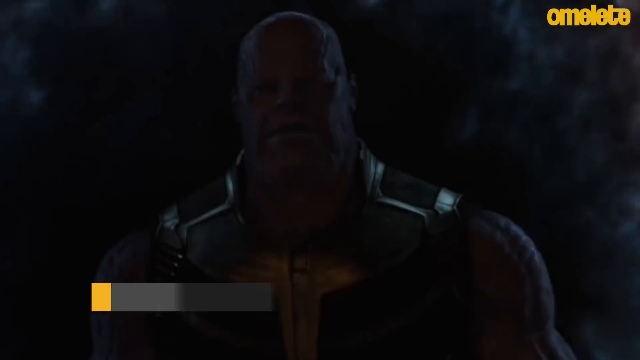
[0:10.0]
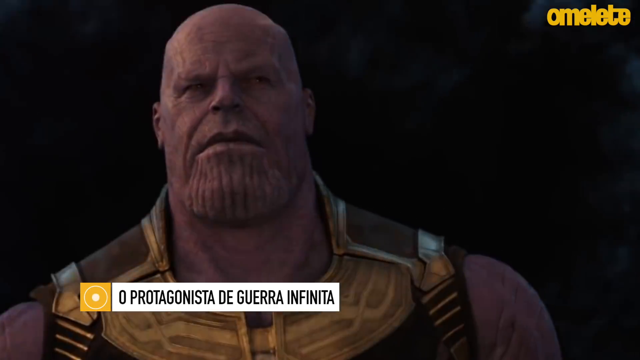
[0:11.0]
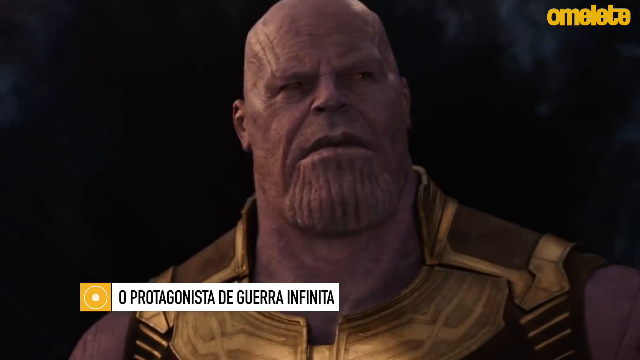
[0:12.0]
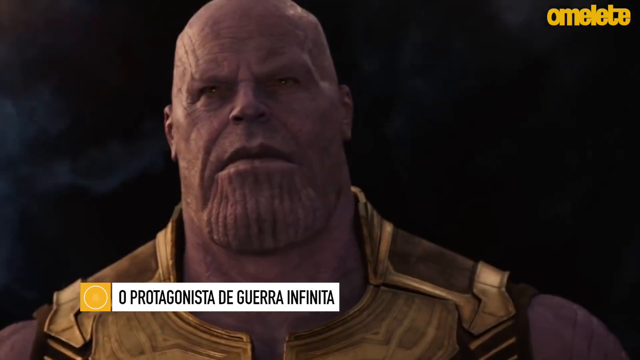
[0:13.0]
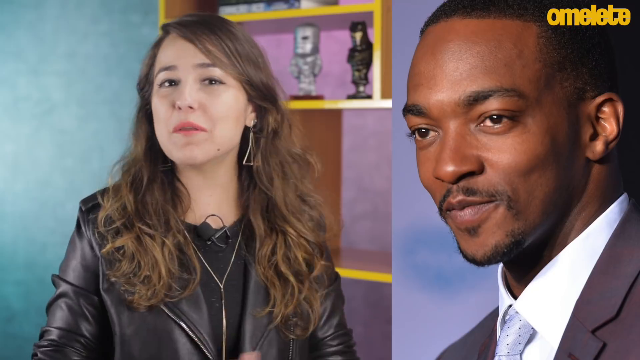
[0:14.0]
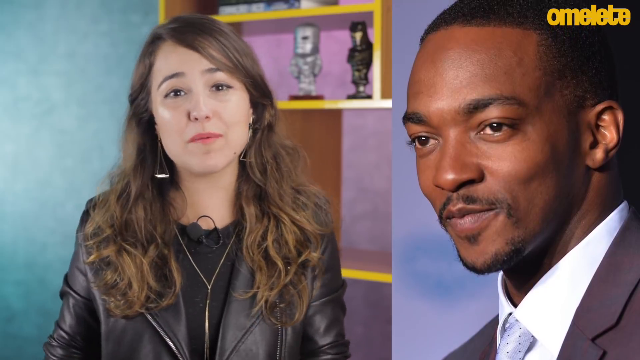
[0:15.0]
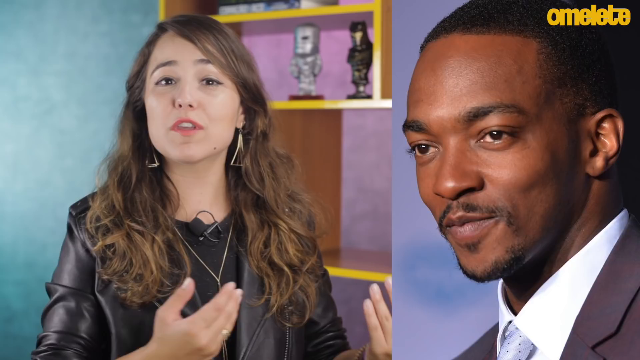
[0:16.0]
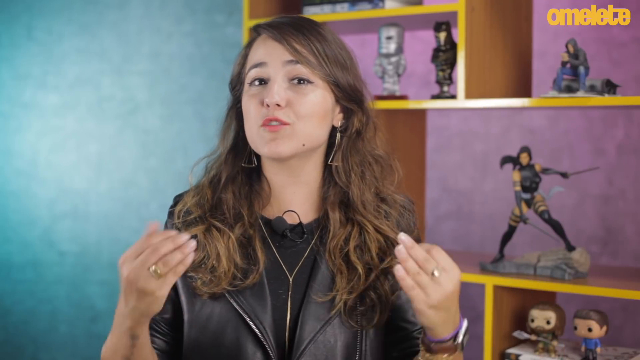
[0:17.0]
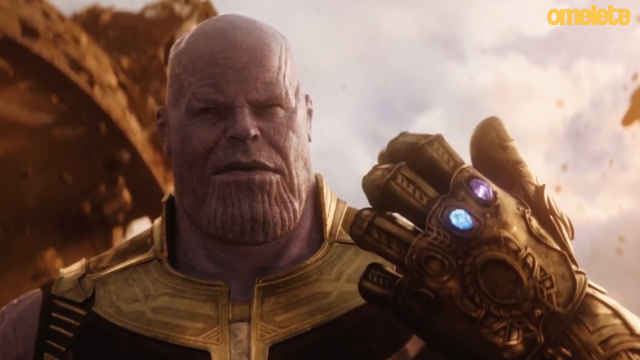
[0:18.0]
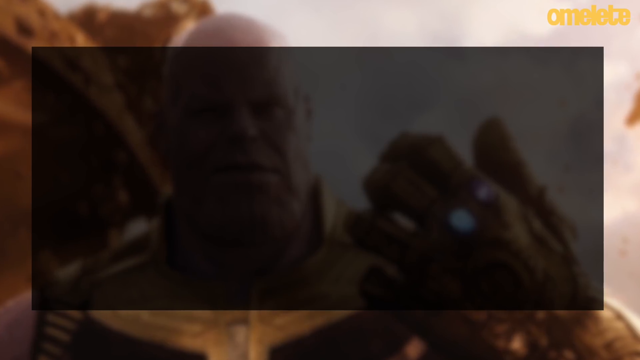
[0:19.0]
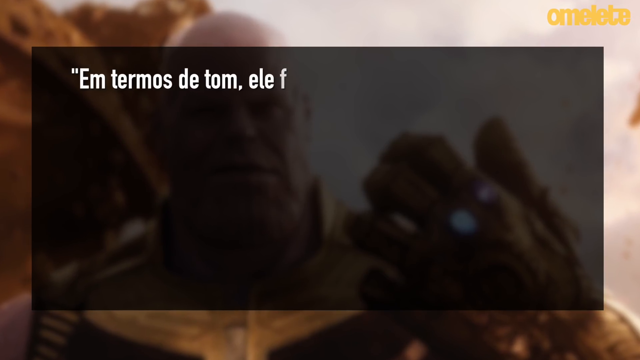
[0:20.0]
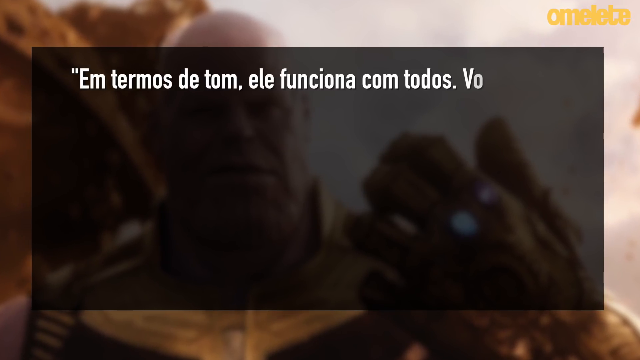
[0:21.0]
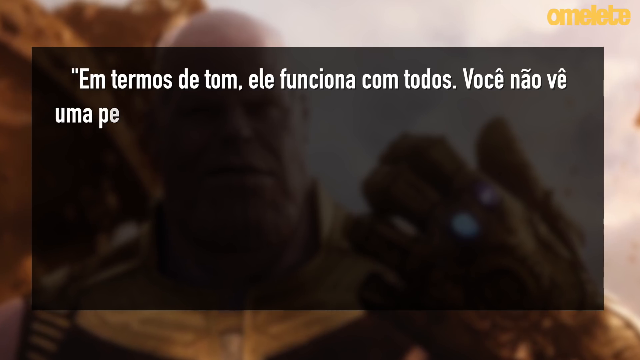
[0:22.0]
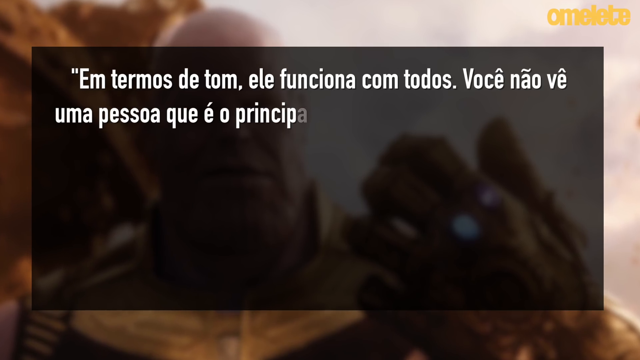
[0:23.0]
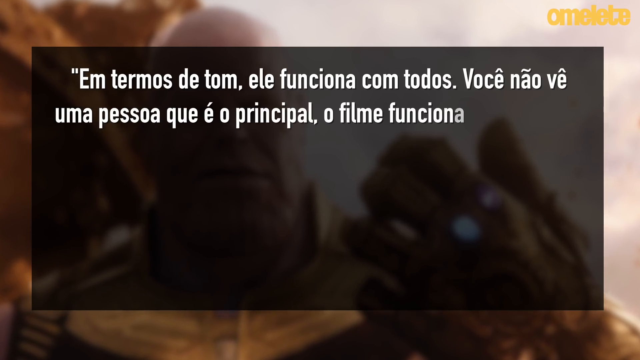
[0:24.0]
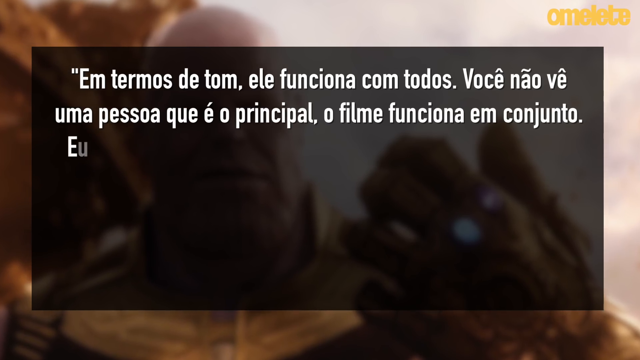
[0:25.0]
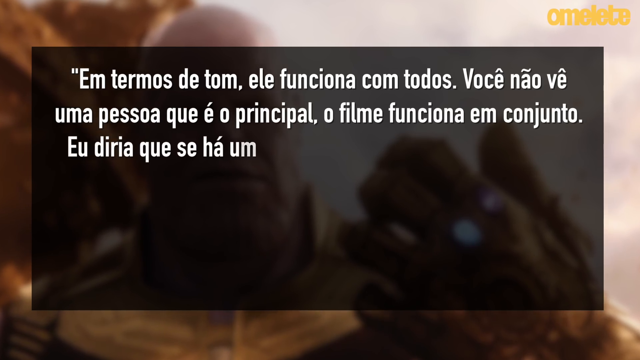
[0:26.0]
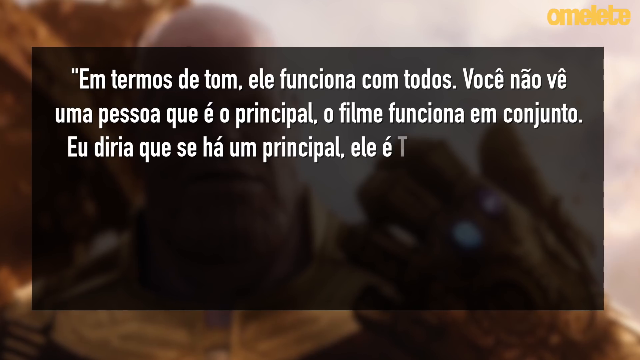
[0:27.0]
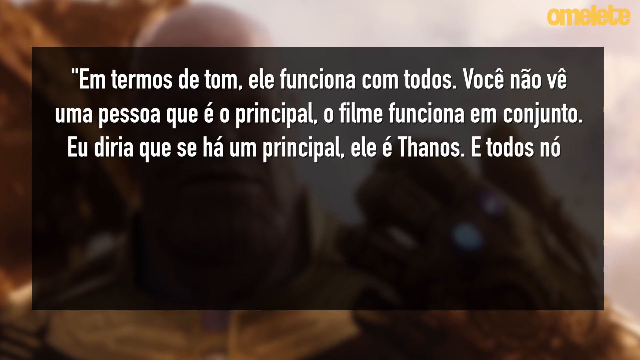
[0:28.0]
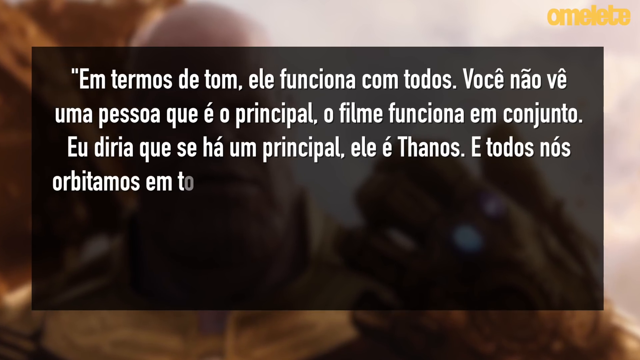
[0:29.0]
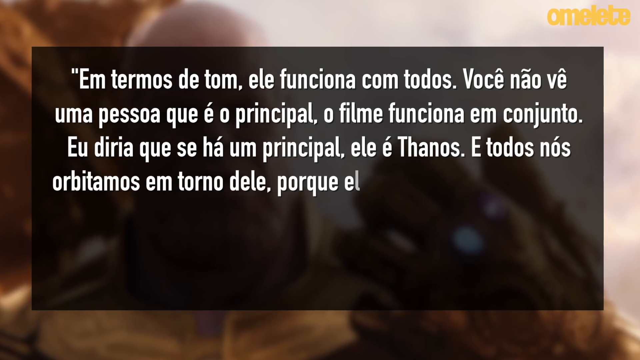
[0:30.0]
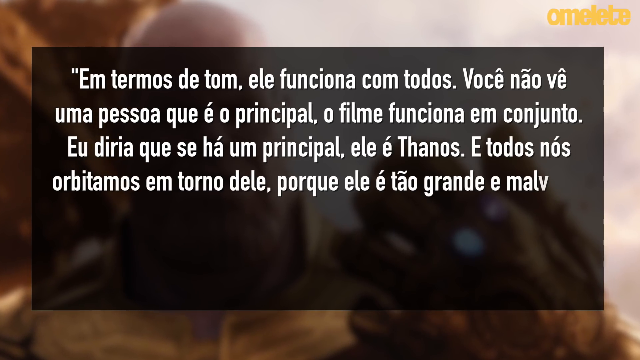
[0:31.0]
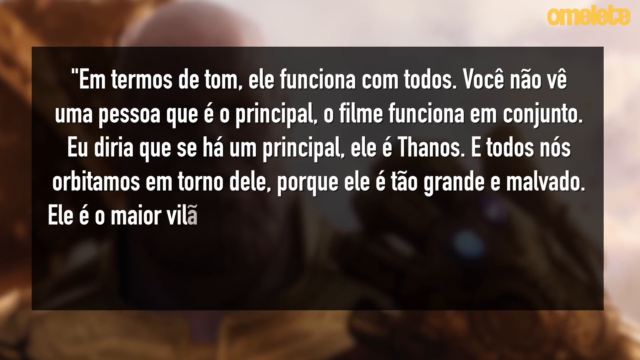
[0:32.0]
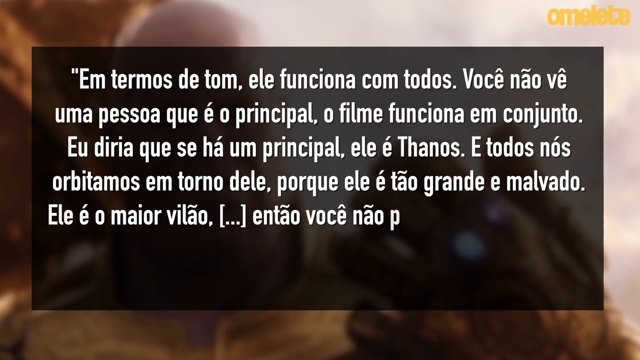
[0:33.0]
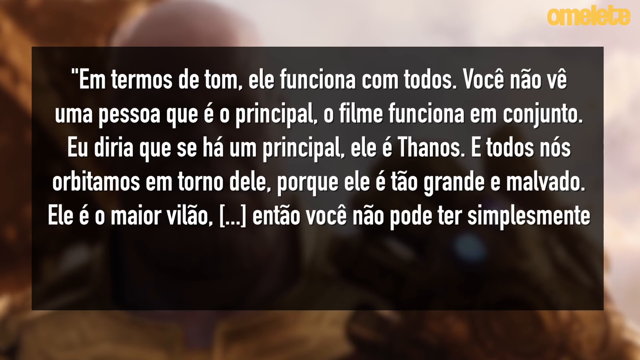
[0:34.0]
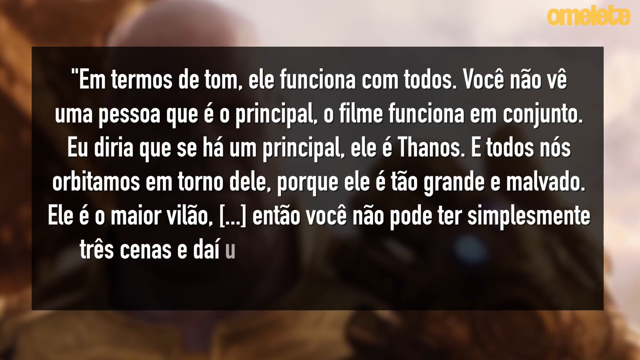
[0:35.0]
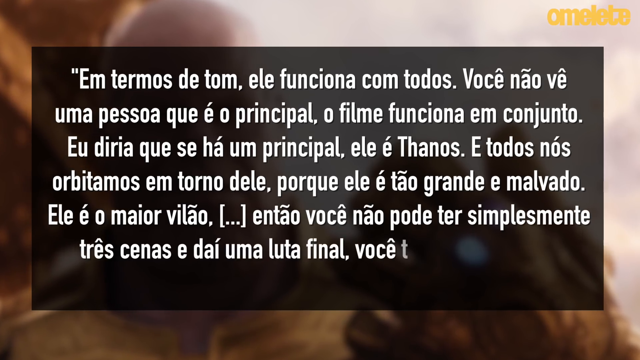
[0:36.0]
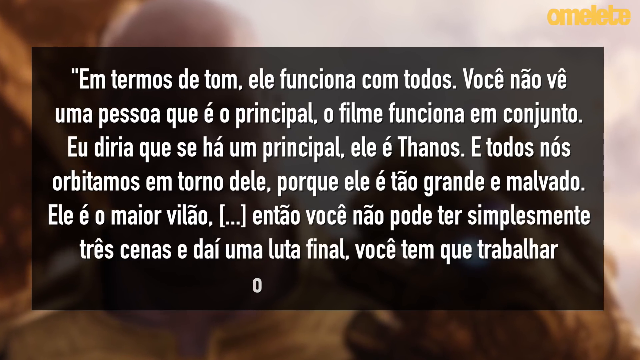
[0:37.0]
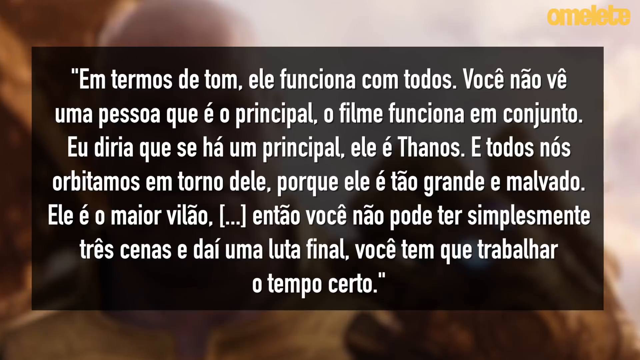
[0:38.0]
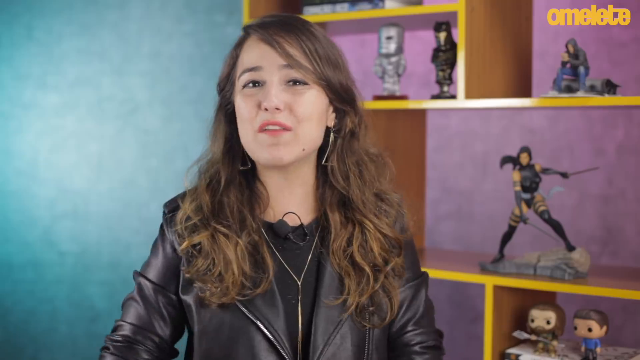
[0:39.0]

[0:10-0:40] A still of the Marvel character Thanos from the film Infinity War appears, with the text "omelet" in the top right corner and a caption below Thanos that seems to be in Spanish. The video switches to the woman talking to the camera, then shows Anthony Mackie, who plays the new Captain America in the Avengers films. Mackie is removed and the woman is shown talking again, before the video switches to Thanos holding all the infinity stones in his hand, with Spanish text that mentions Thanos and something big and ends with "tempo cierto". The video then switches back to the woman talking to the camera.